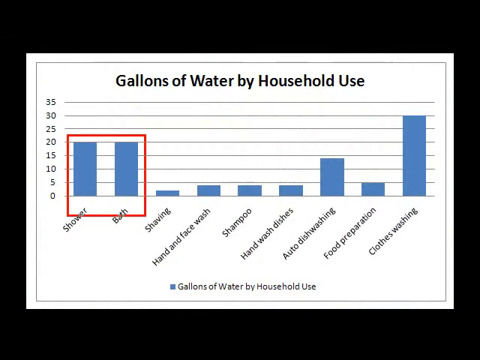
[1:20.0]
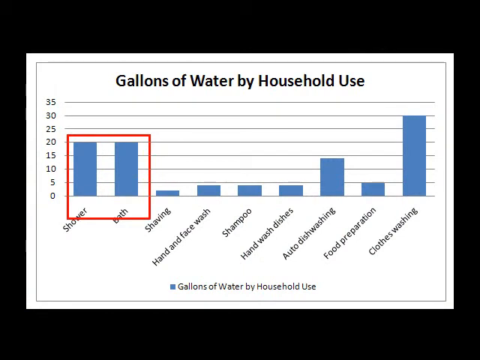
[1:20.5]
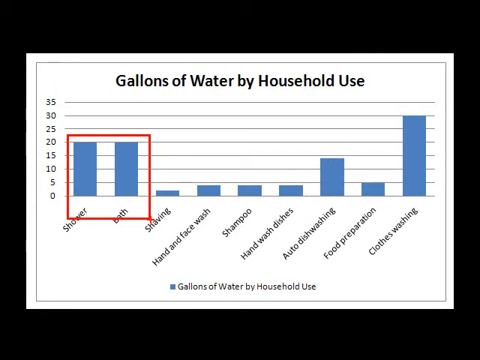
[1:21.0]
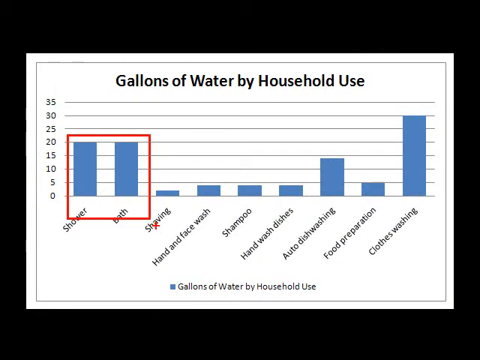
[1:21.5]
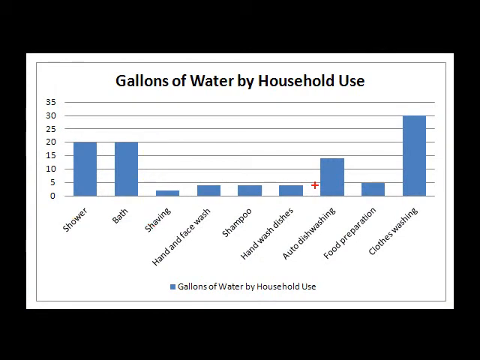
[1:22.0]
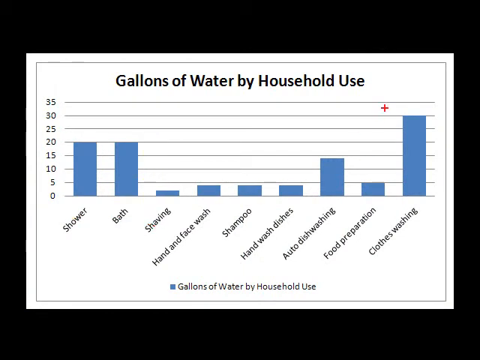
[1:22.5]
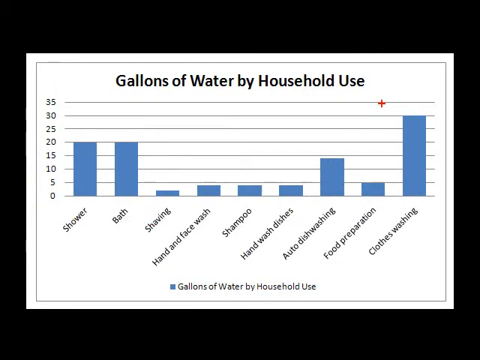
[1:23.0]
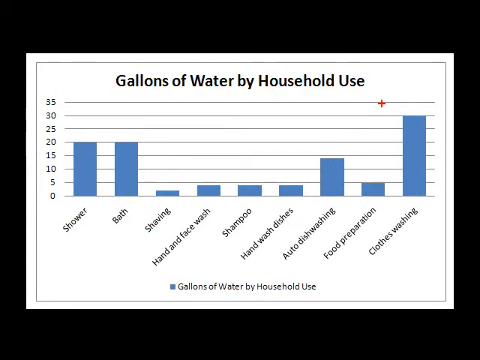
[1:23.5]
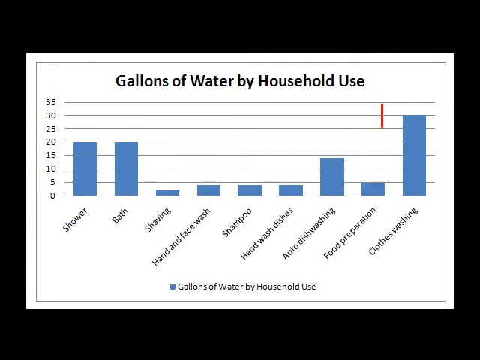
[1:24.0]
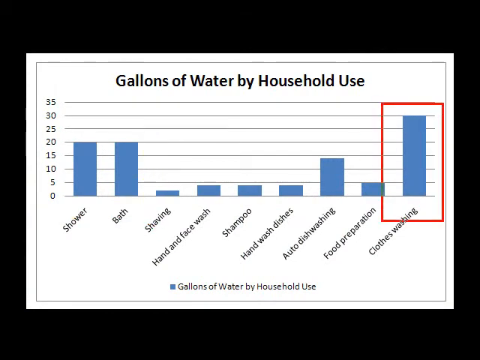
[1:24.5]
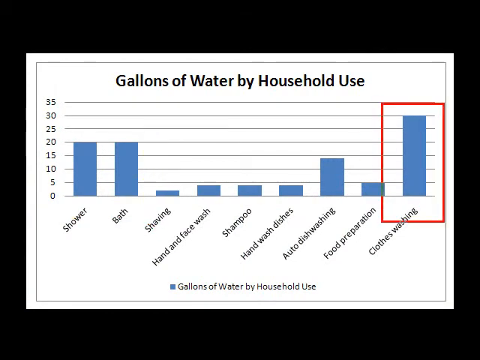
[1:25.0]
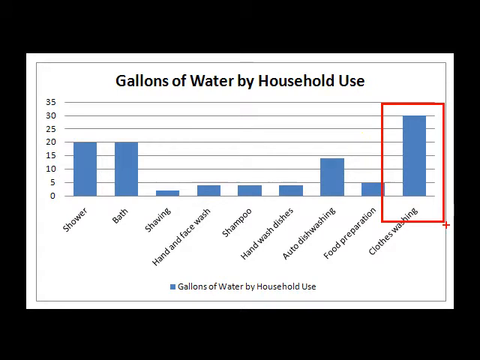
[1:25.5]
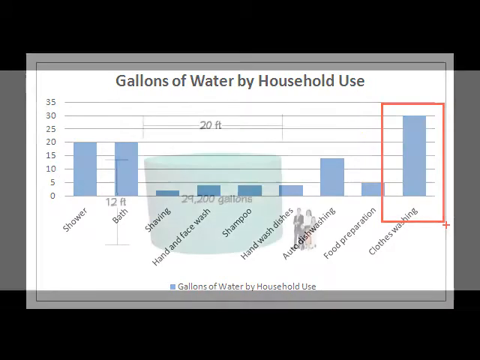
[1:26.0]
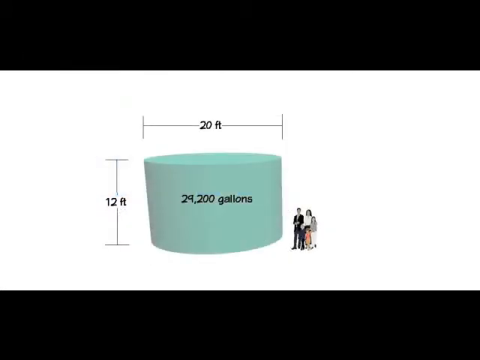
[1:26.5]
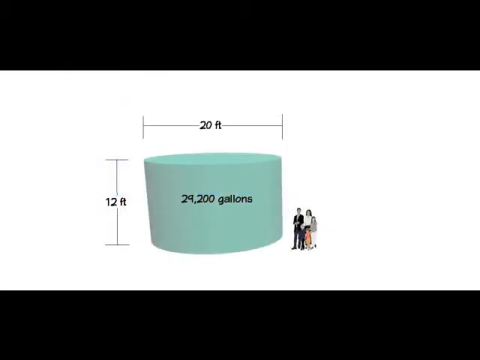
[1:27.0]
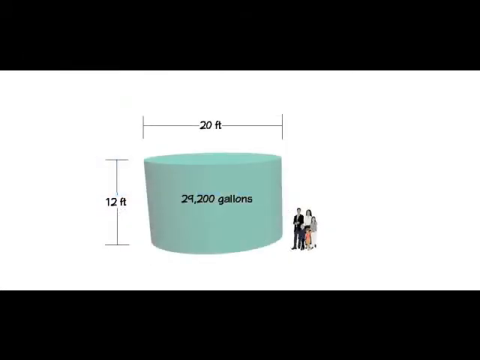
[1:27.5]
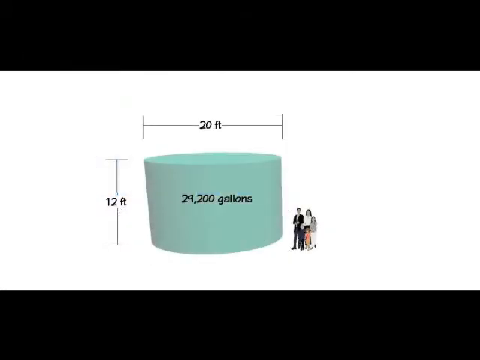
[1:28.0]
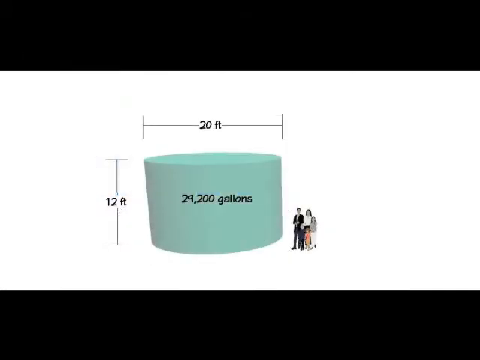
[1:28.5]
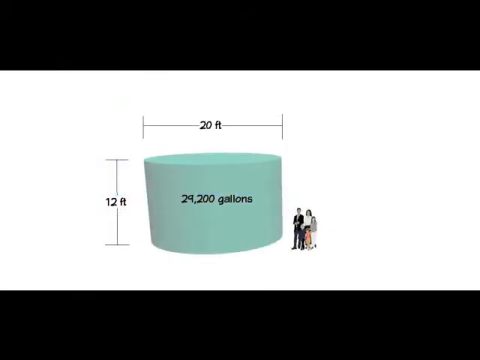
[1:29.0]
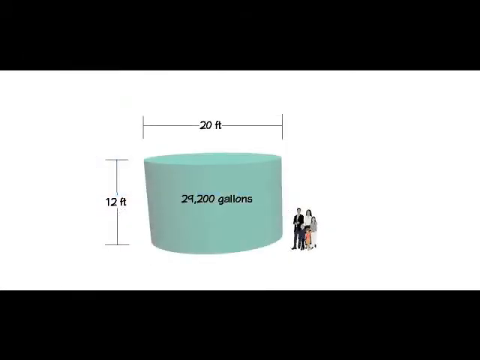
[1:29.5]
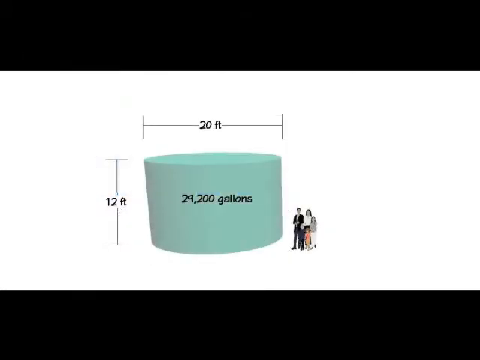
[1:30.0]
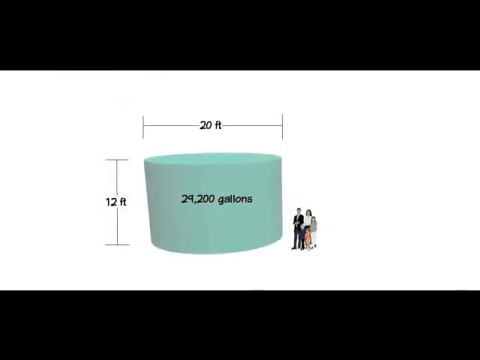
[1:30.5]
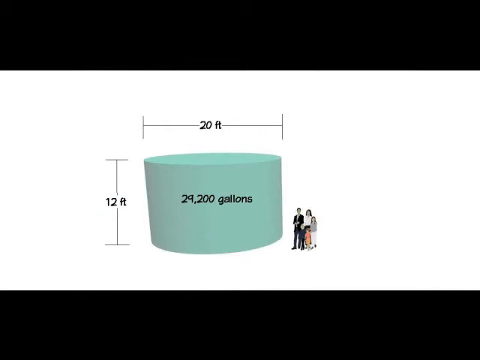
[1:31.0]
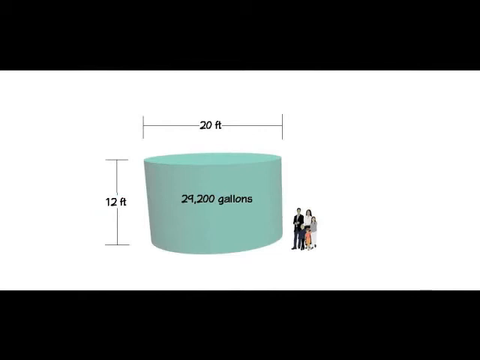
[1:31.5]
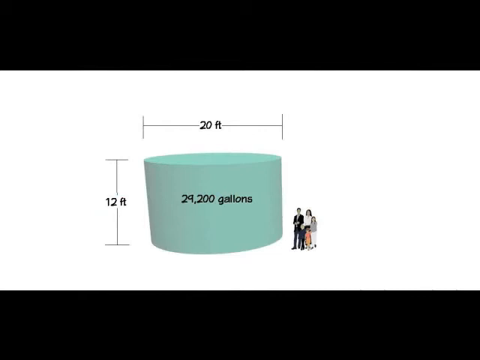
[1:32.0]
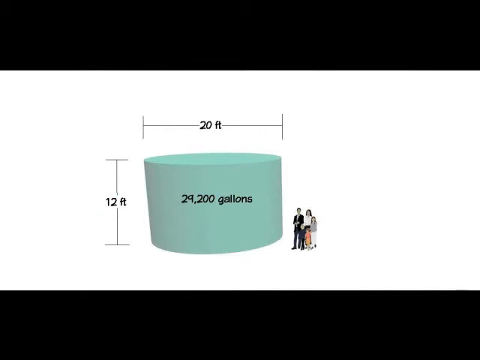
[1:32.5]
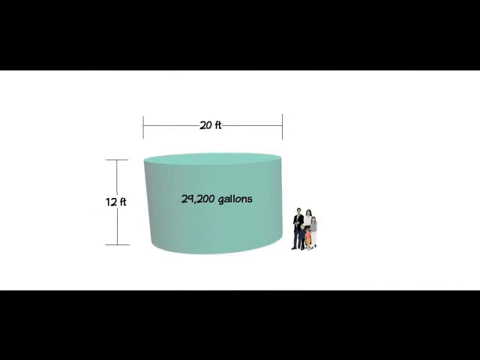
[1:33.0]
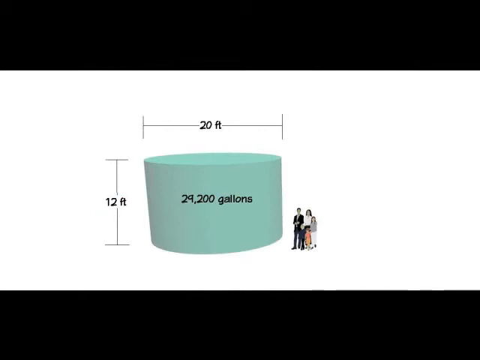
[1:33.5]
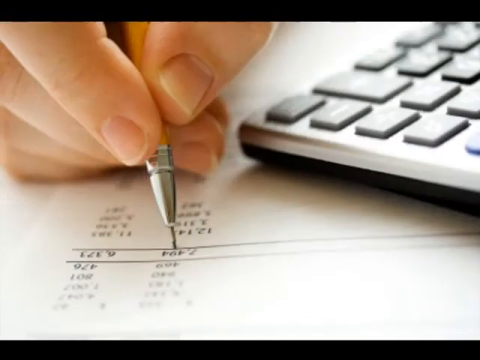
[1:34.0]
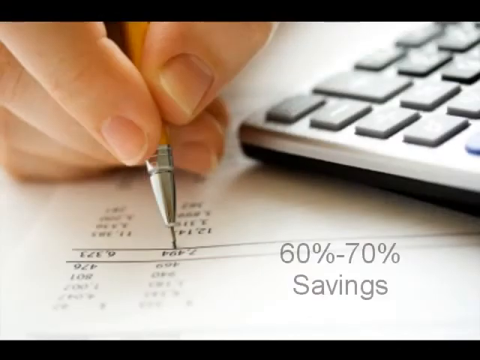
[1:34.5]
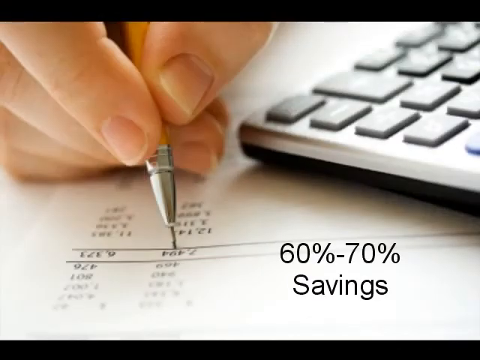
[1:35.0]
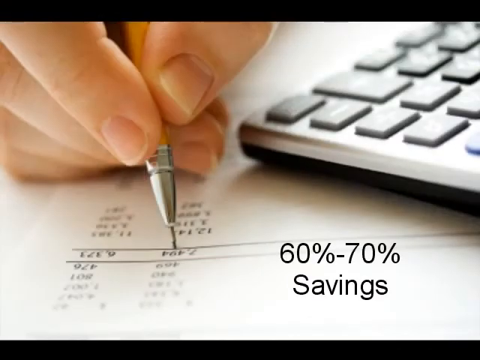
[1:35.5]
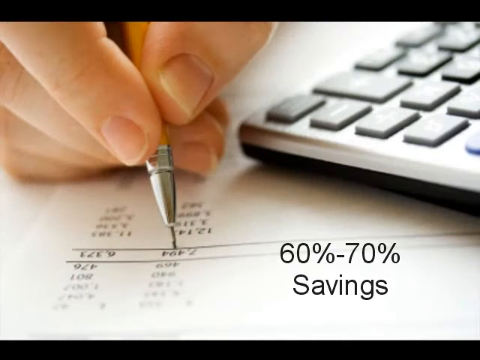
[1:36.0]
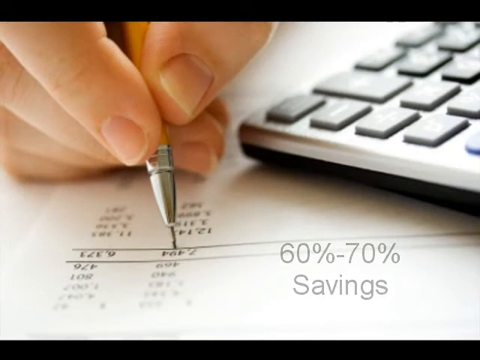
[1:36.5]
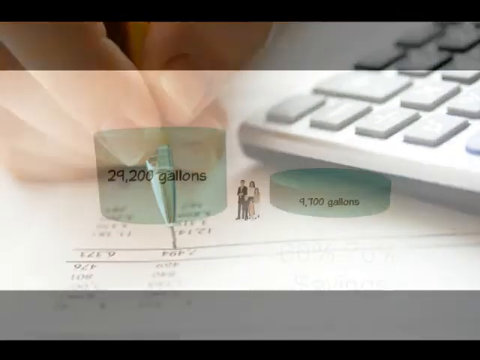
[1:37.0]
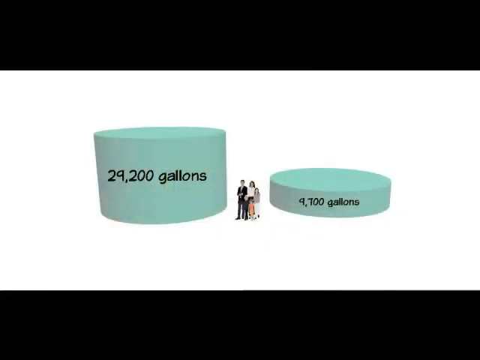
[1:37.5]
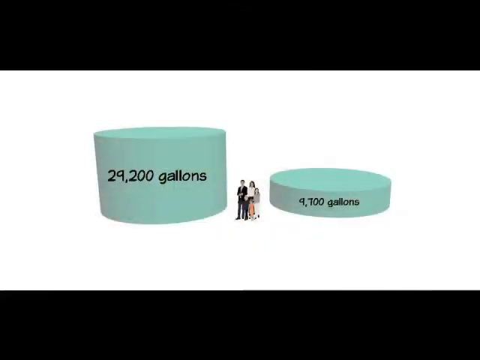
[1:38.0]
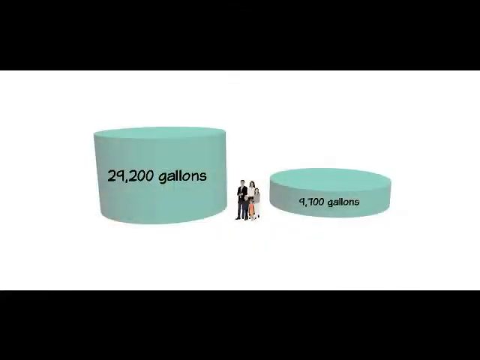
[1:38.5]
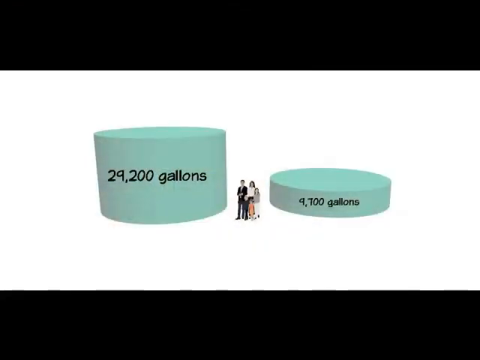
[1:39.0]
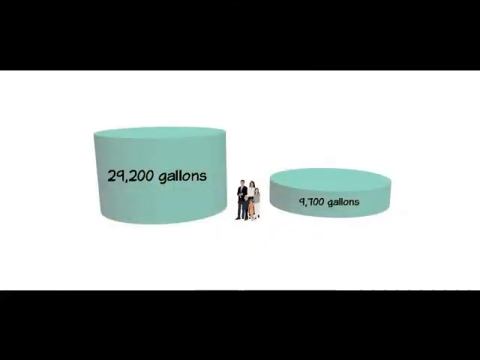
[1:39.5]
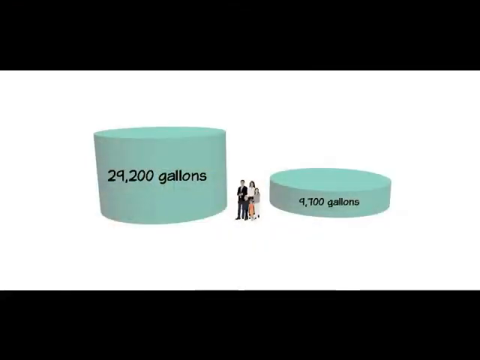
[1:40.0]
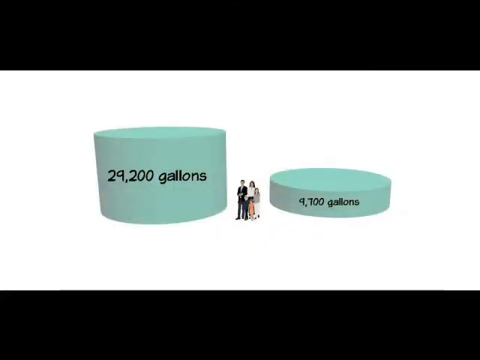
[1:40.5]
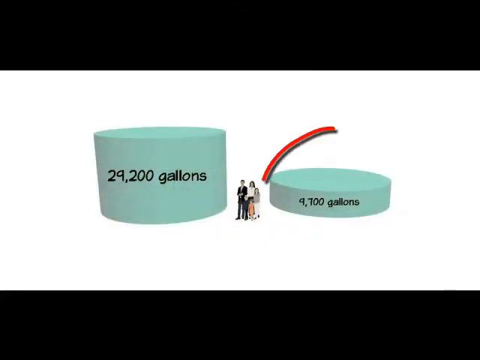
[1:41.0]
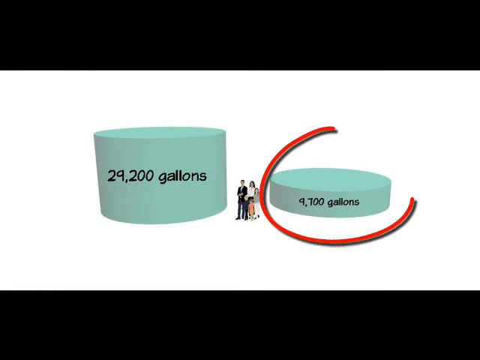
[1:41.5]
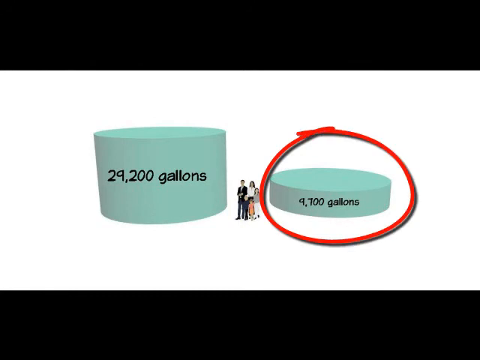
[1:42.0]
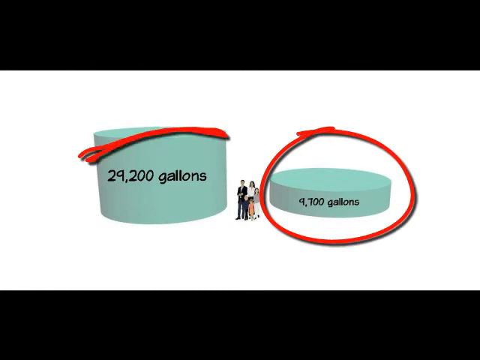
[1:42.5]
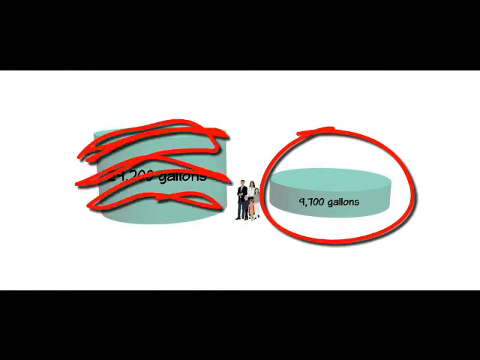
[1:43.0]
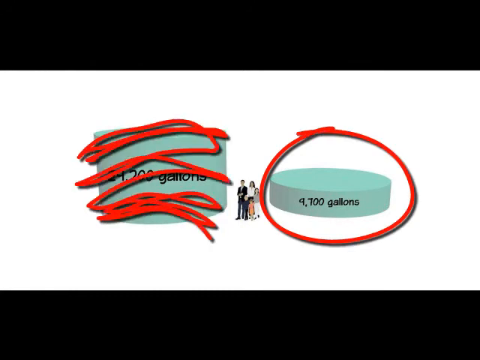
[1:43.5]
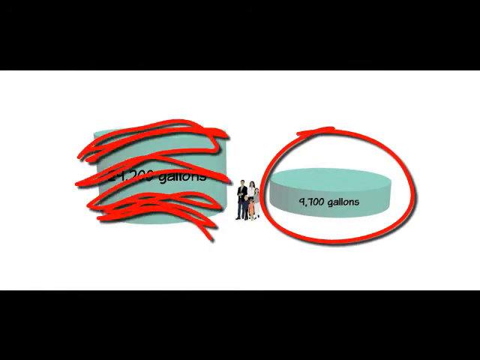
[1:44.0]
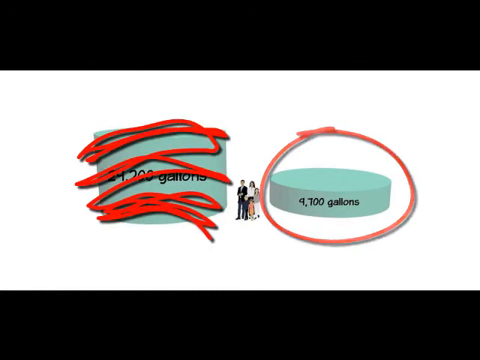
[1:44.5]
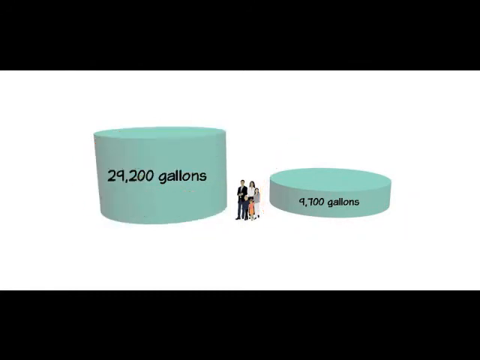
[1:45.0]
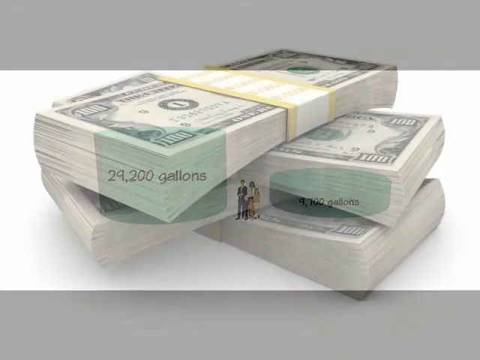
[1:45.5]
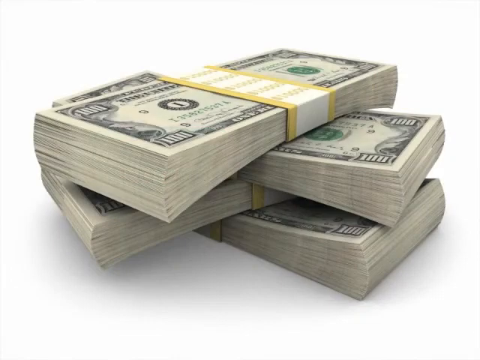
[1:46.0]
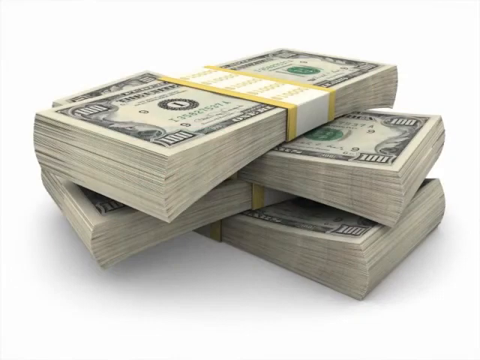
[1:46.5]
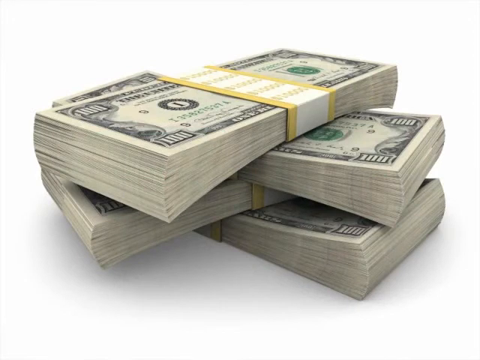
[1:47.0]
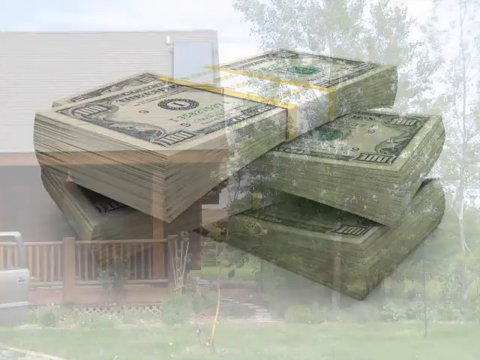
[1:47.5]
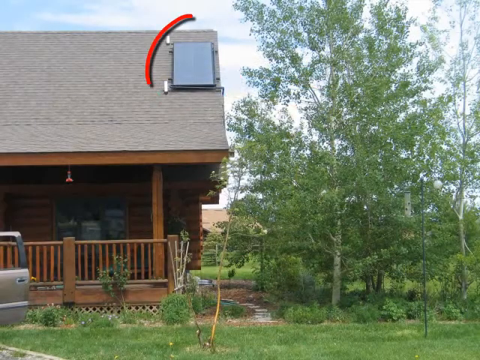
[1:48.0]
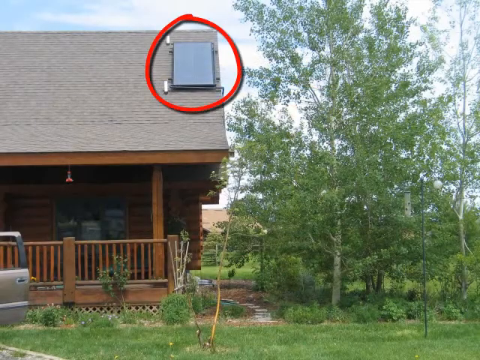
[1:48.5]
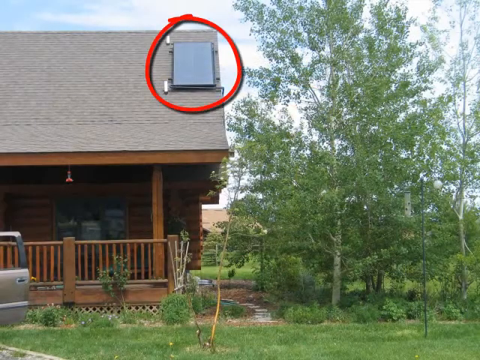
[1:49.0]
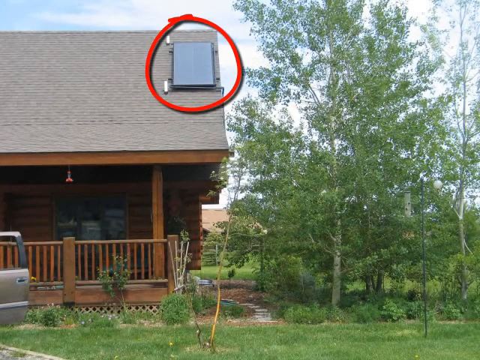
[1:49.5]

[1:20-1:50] A red square appears around shower and bath on the graph. An arrow-shaped cursor clicks and drags around the clothes washing bar. Next, a family of four stands next to a light green, kind of cylinder shape that reads "29,200 gallons", with a height bar showing 12 foot and a width bar showing 20 foot. The next image is a hand holding a pen over a sheet of paper with lots of typed numbers; there seems to be a calculator on top of the paper too, and the caption reads "60% to 70% savings". The same family is then shown next to the larger cylinder reading "29,200 gallons", with a much shorter cylinder on the other side reading "9,700 gallons". The shorter one is circled in red, and the same red line crosses out the larger cylinder. The next image is a stack of money, seemingly bundles of notes. Then a wooden house by some trees, with a large porch at the front and just a small panel on the roof, which is circled in red.